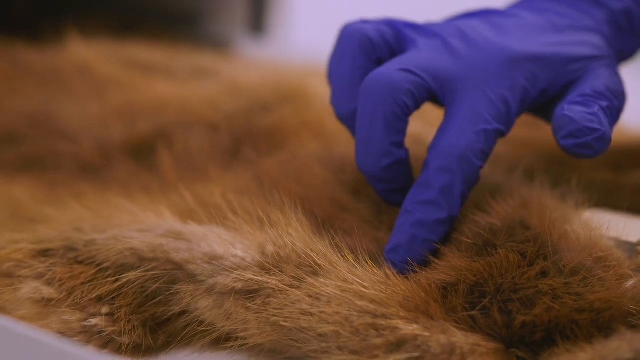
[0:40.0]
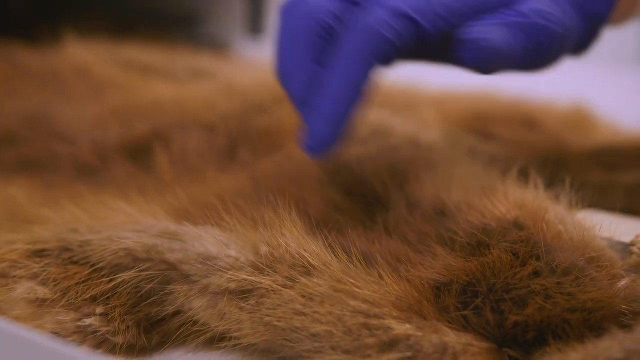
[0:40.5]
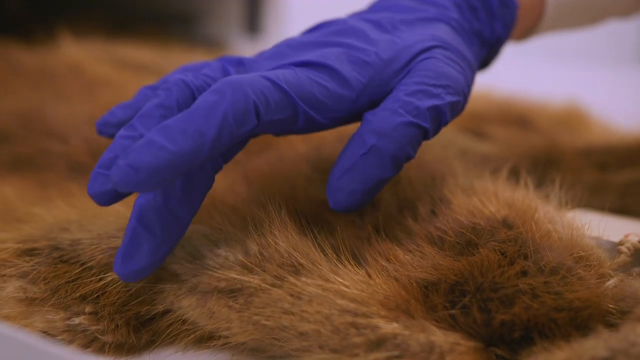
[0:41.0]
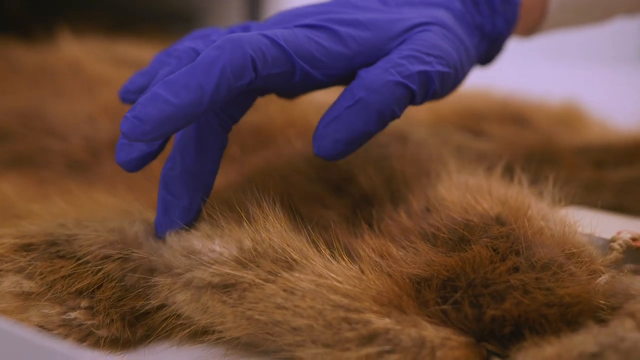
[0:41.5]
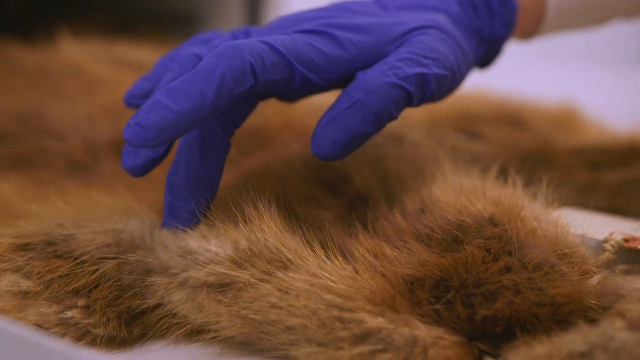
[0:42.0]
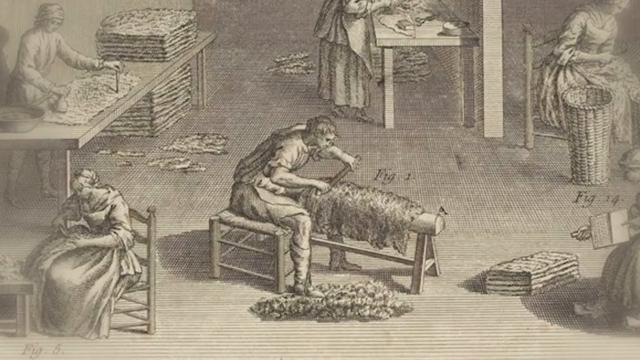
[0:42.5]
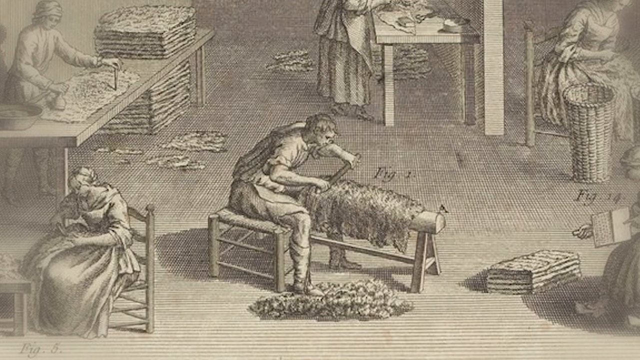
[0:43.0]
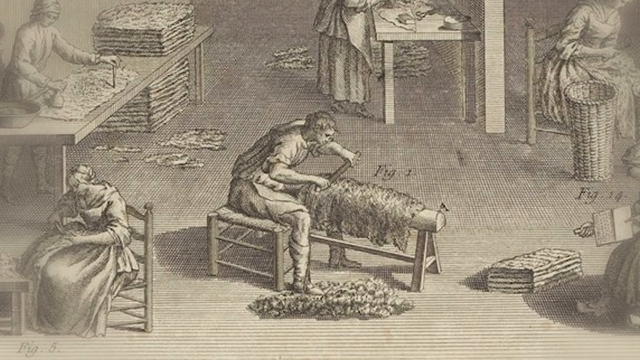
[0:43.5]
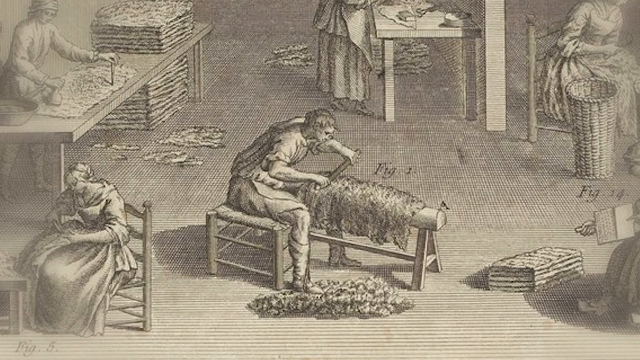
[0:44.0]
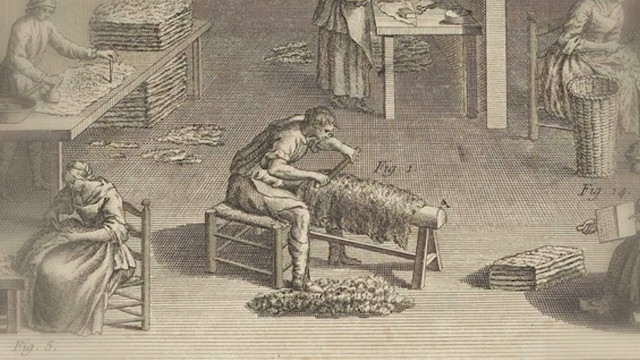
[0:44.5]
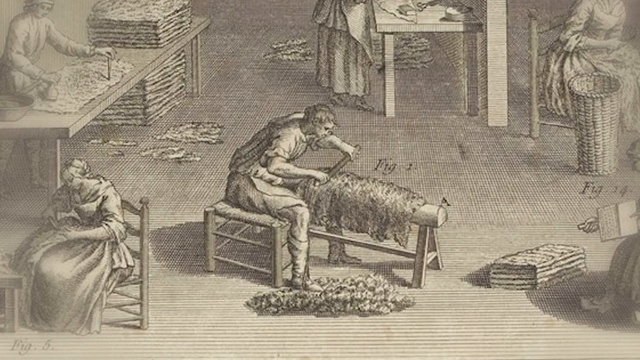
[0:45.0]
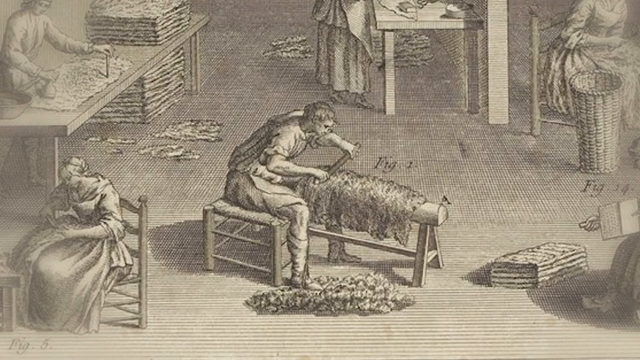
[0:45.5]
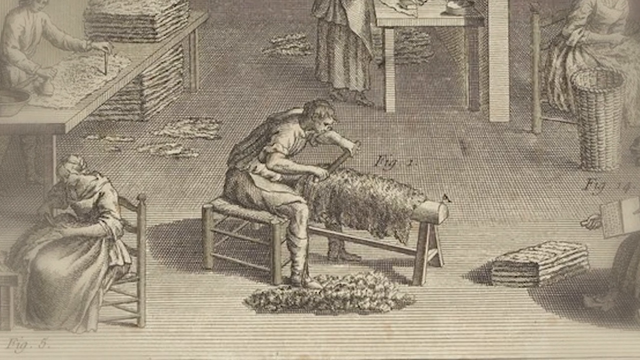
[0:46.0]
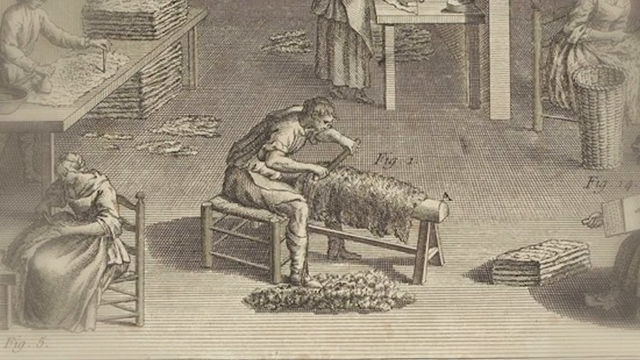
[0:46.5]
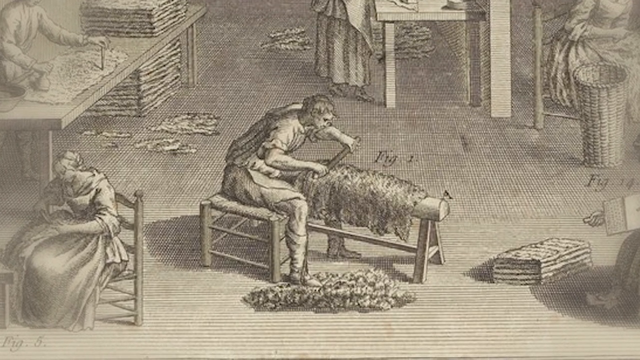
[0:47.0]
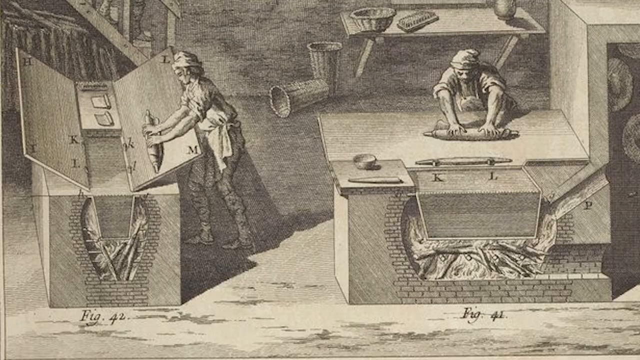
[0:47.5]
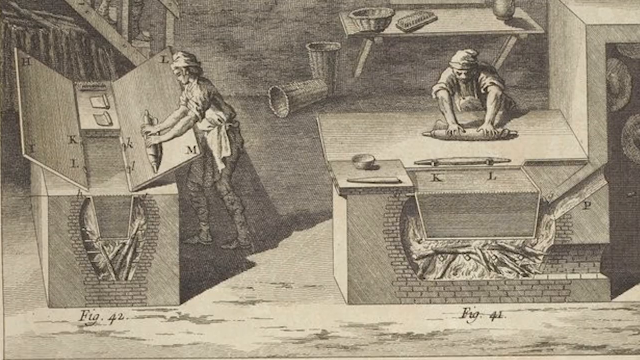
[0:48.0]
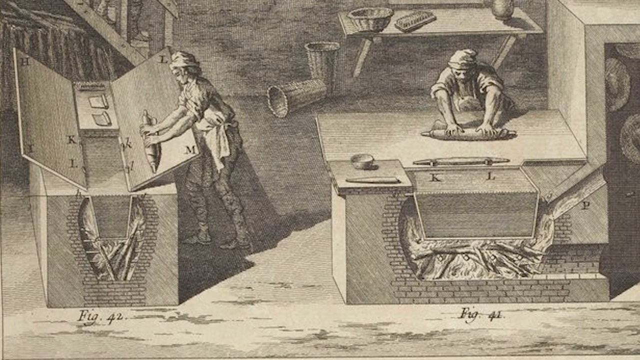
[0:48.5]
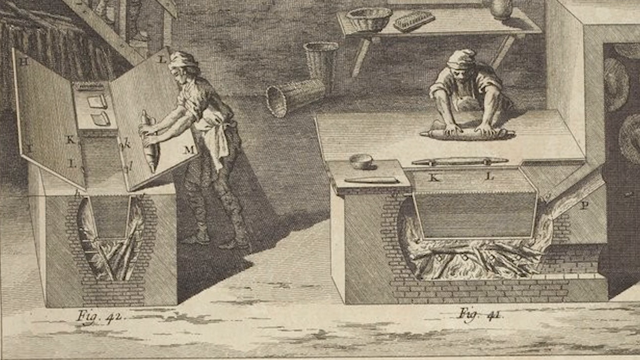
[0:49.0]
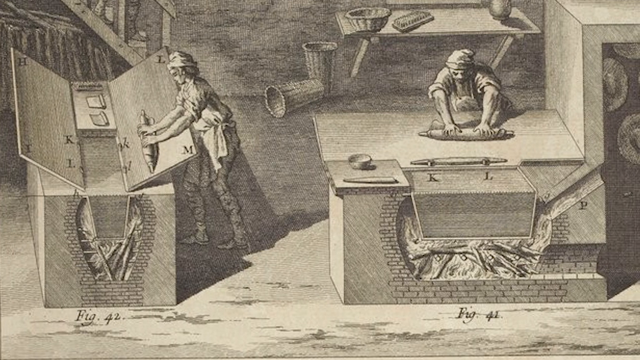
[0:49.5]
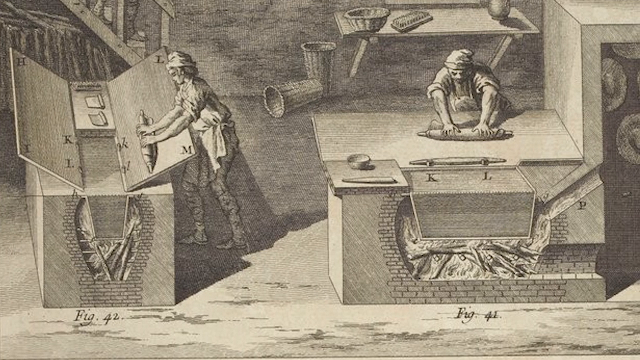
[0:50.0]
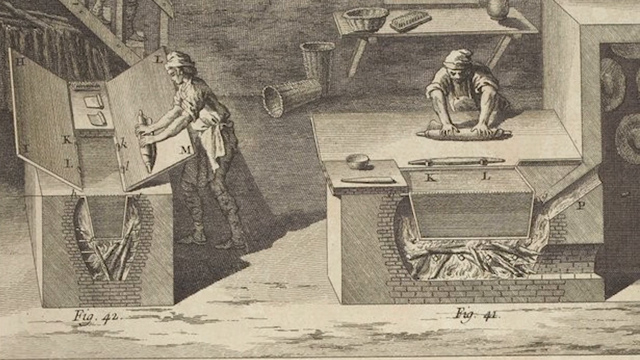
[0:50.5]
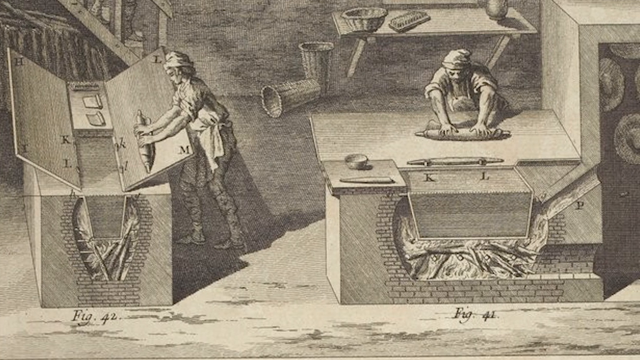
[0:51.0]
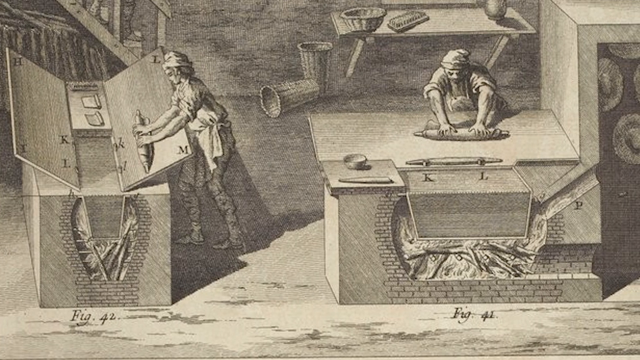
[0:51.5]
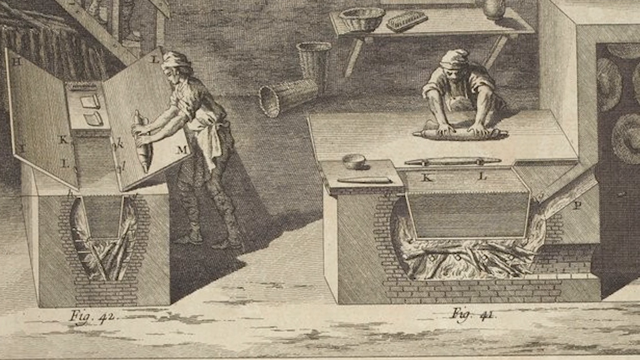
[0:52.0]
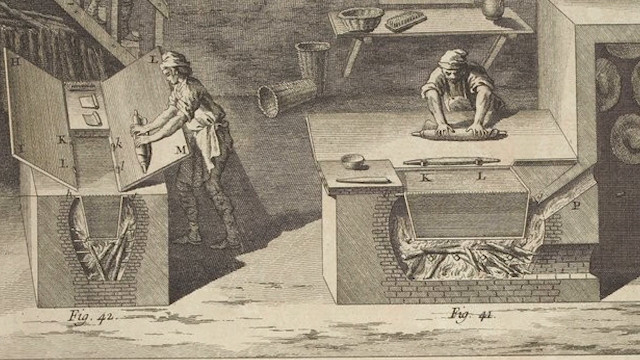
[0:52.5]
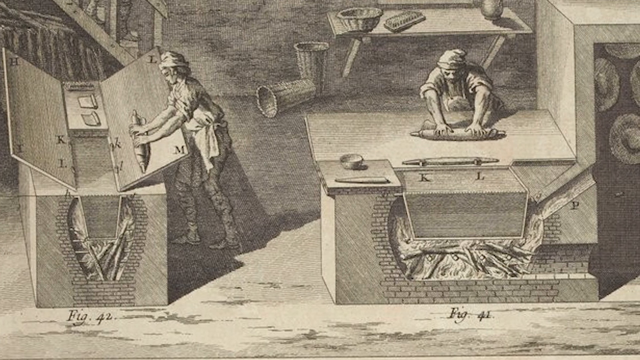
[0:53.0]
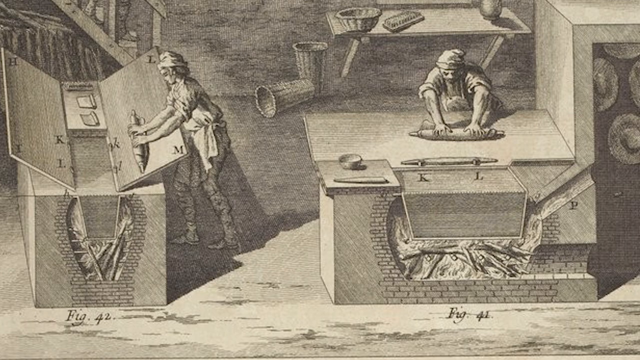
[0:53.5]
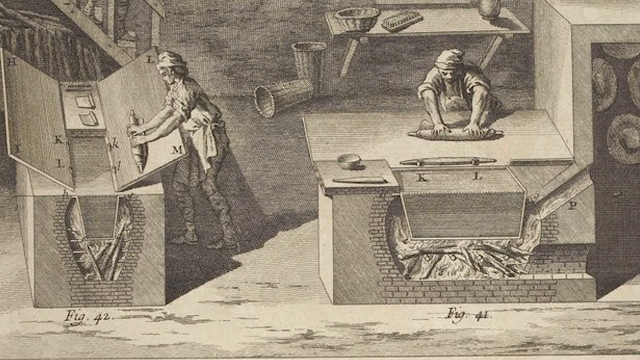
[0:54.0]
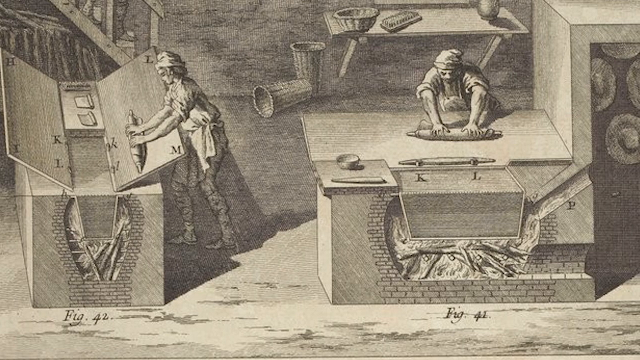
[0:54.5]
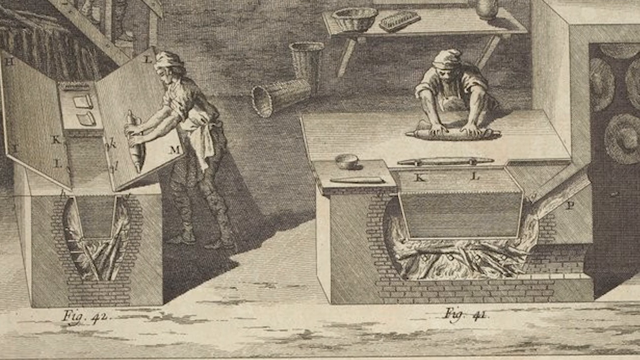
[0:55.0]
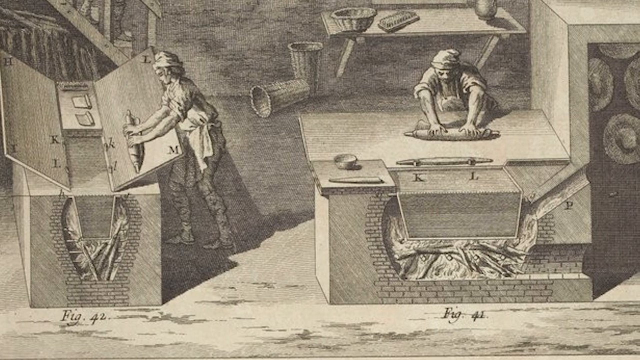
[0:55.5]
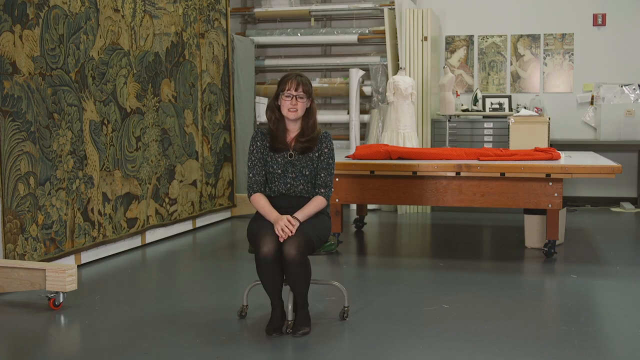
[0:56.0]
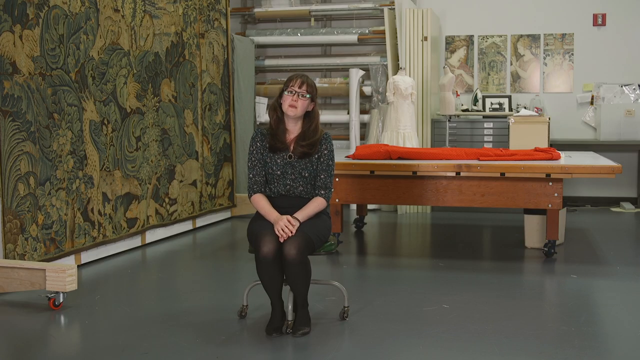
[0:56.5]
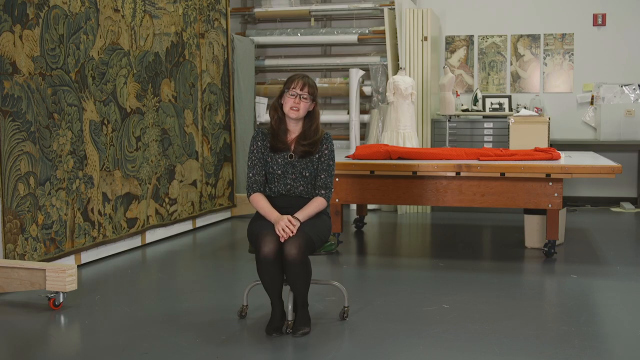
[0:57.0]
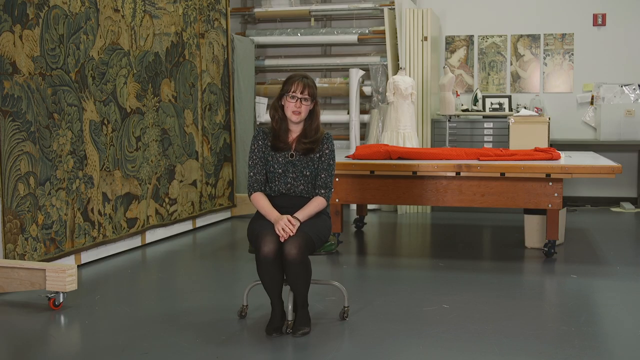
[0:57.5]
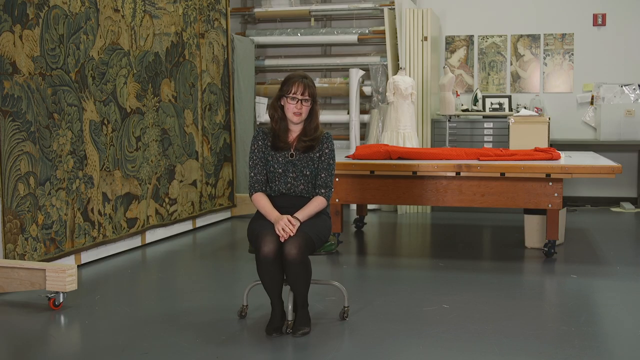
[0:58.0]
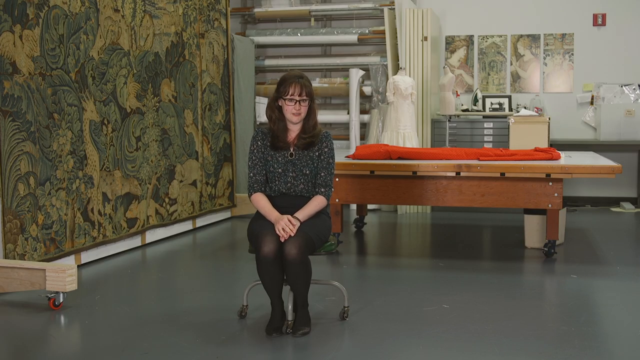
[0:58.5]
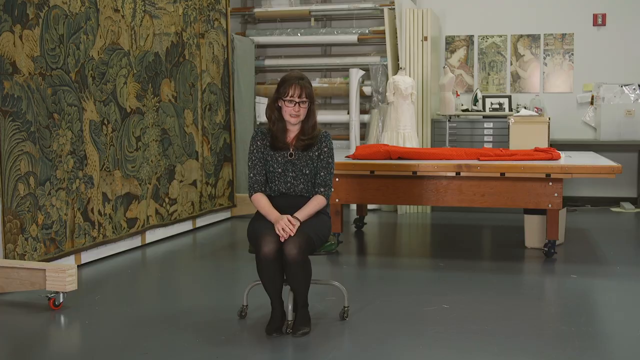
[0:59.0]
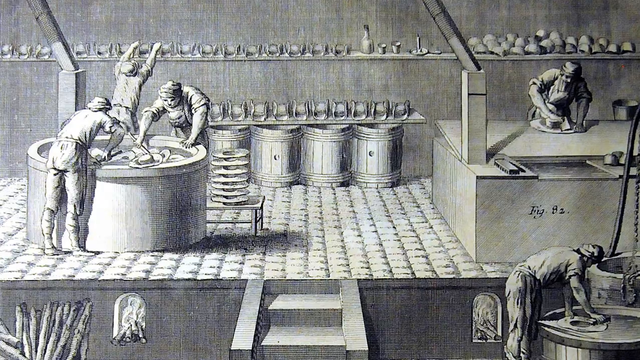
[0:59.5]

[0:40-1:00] Wearing gloves, she touches the fur specimen and rubs her hands over its surface. It then cuts to a black-and-white sketch of a historical scene of wool processing, specifically the combing of wool. The central figure is a man using a tool to comb or card wool, likely preparing it for spinning or weaving. Other individuals appear in what seems to be a workshop or domestic setting, apparently part of the textile industry. Another depiction follows that possibly looks like a bakery: there are furnaces and people rolling something, possibly wool. It cuts back to Anne Getz in the museum room, where she speaks for a few seconds.